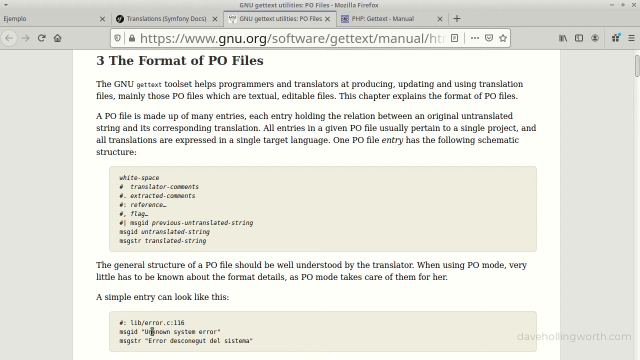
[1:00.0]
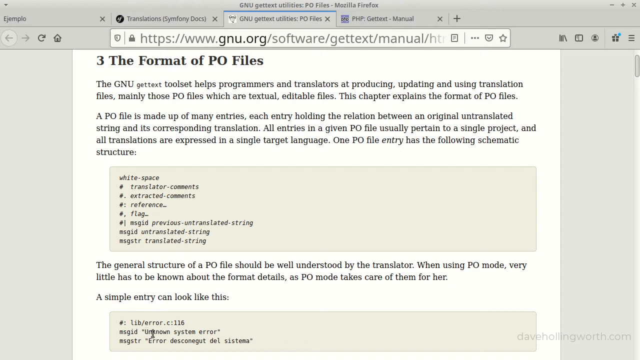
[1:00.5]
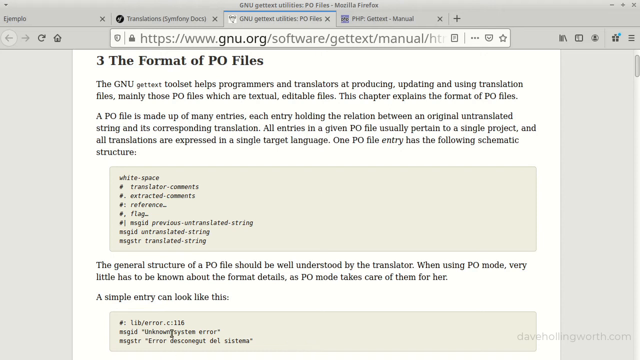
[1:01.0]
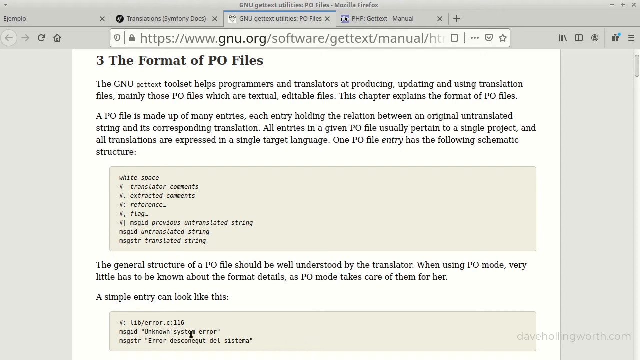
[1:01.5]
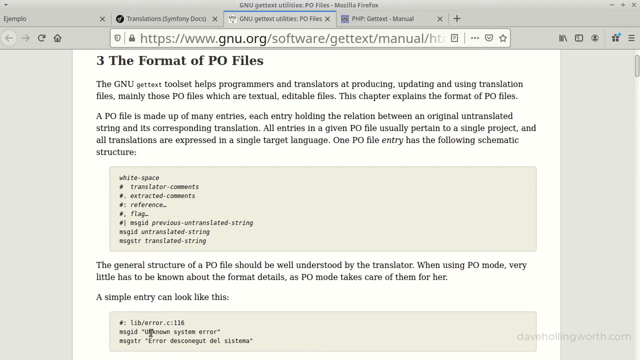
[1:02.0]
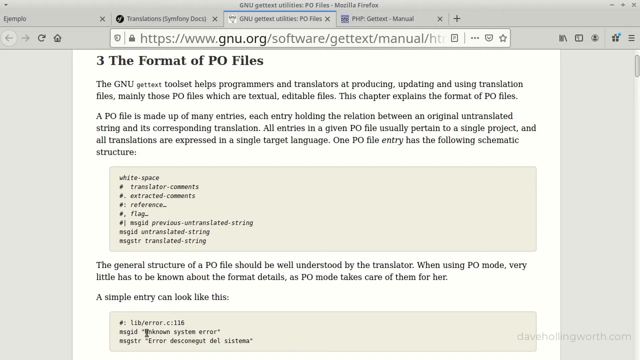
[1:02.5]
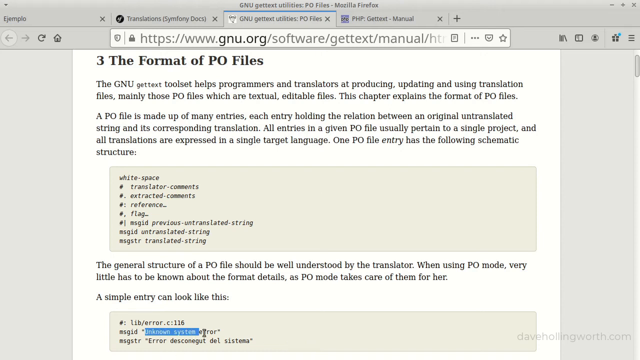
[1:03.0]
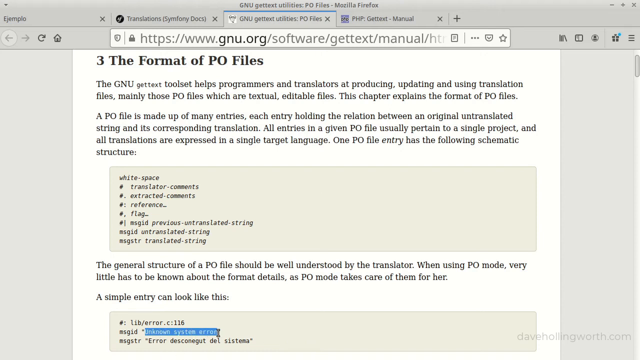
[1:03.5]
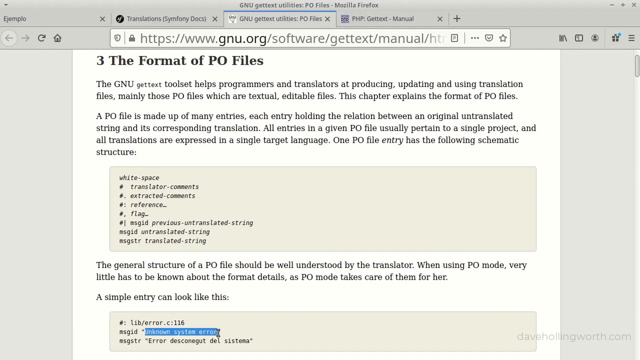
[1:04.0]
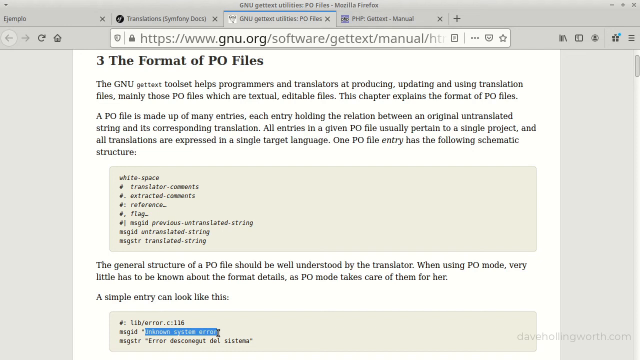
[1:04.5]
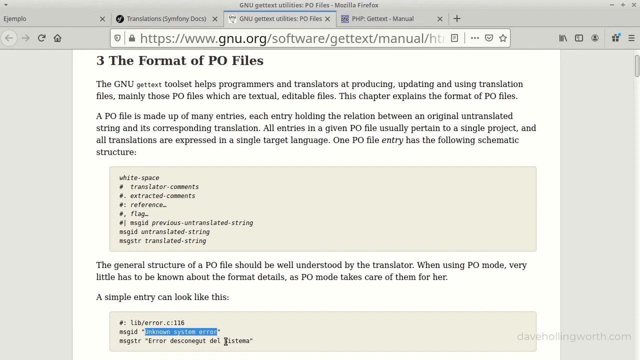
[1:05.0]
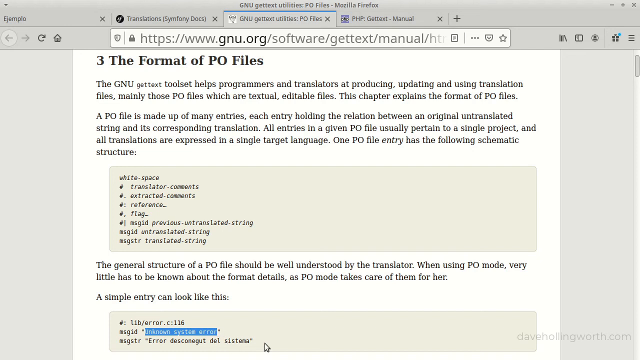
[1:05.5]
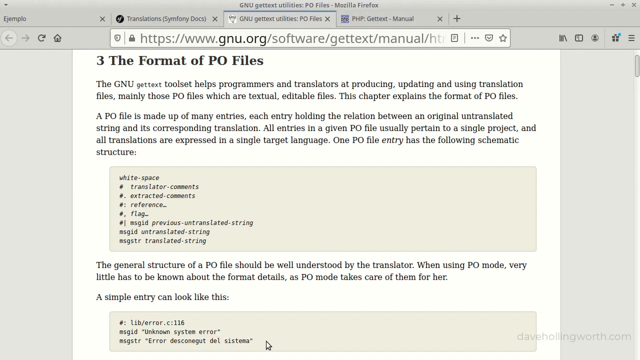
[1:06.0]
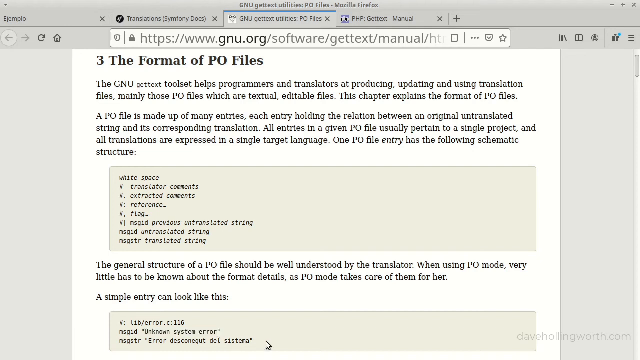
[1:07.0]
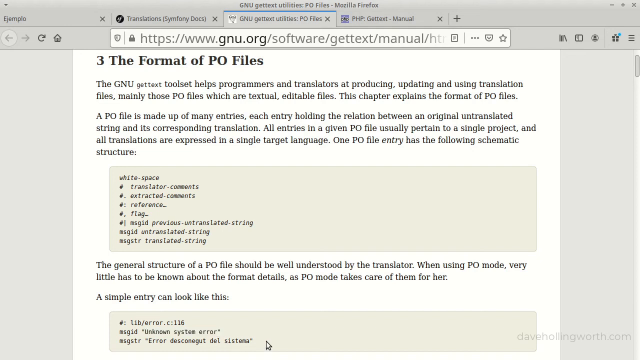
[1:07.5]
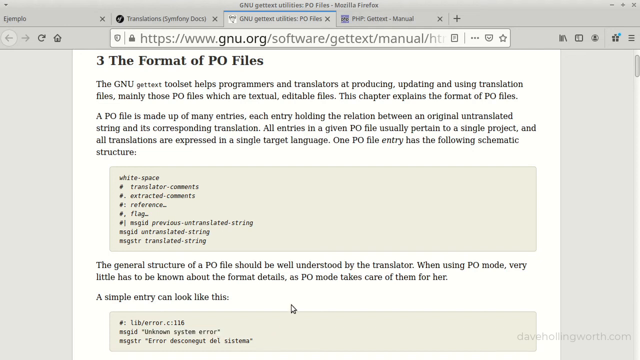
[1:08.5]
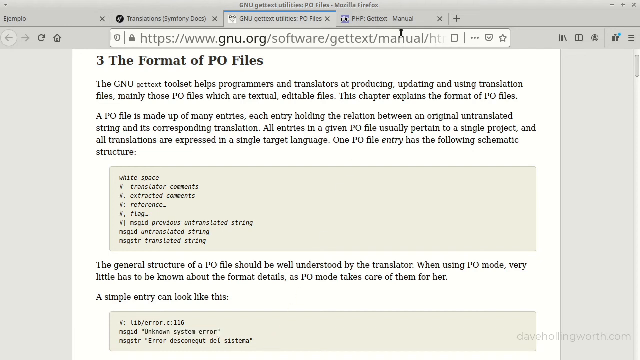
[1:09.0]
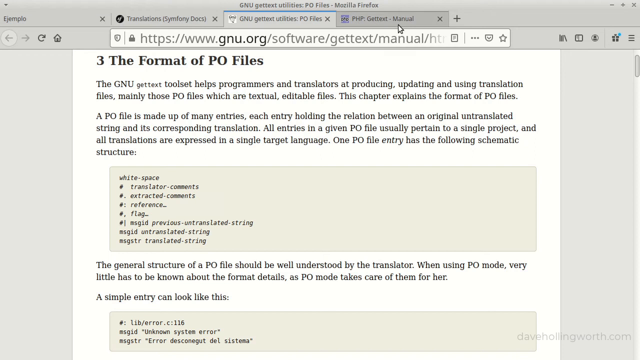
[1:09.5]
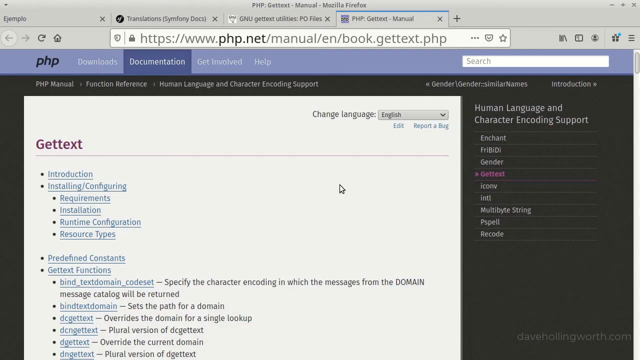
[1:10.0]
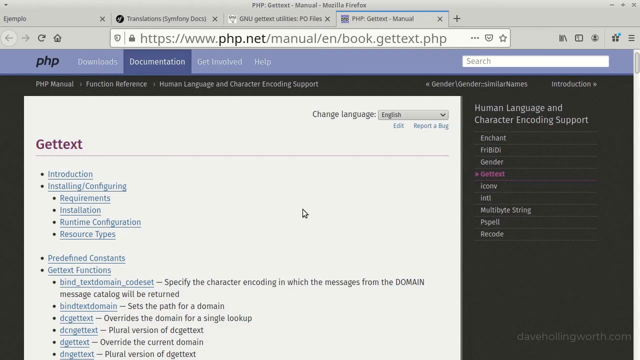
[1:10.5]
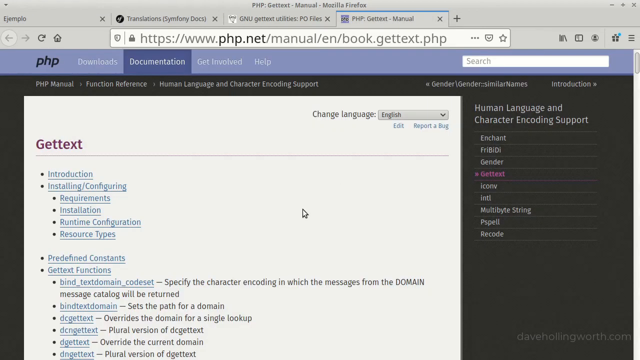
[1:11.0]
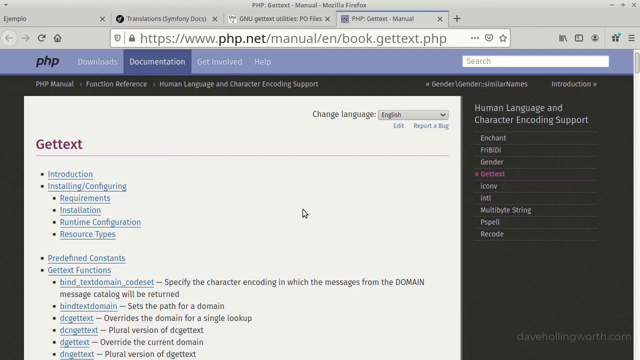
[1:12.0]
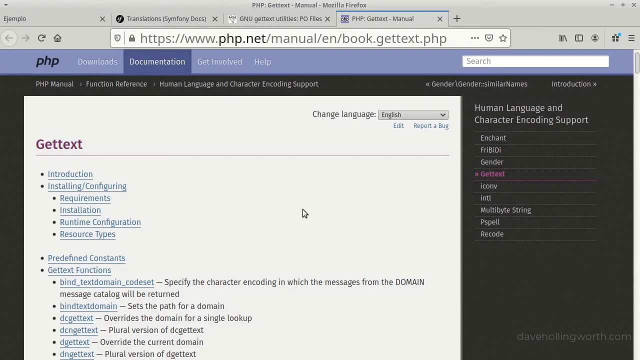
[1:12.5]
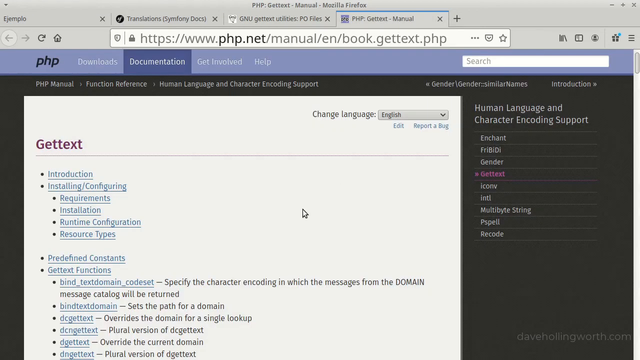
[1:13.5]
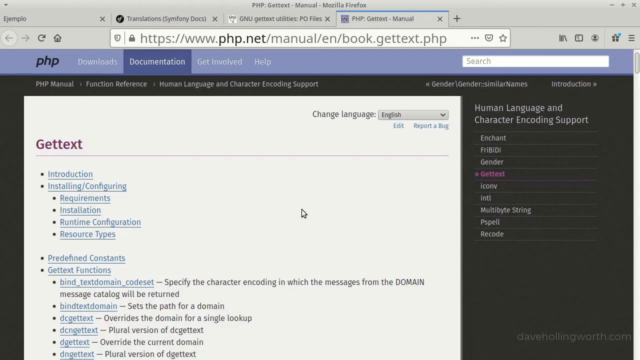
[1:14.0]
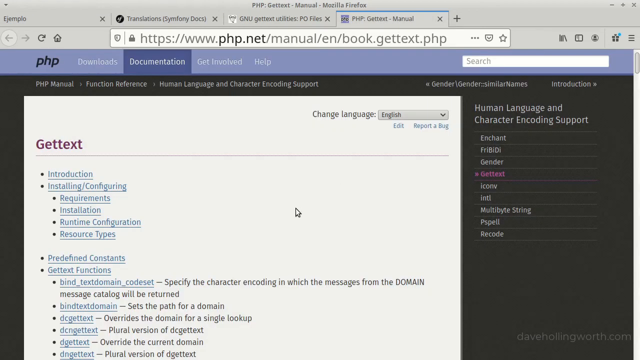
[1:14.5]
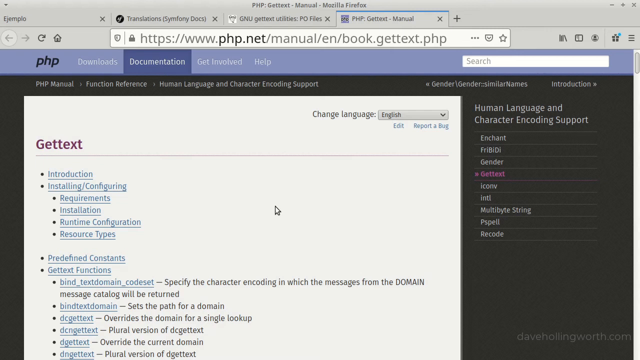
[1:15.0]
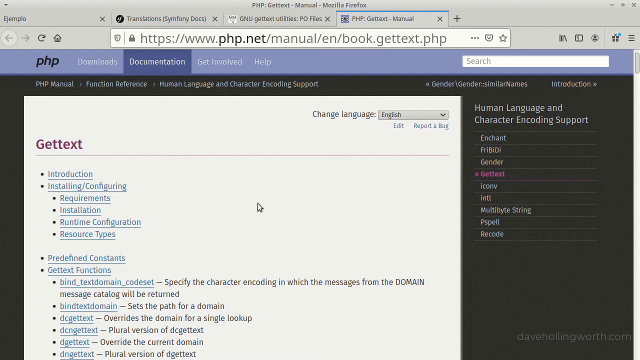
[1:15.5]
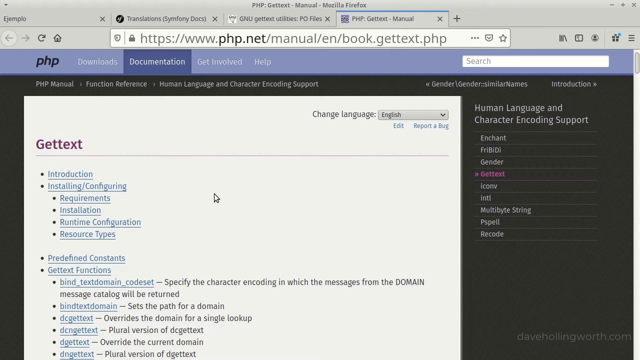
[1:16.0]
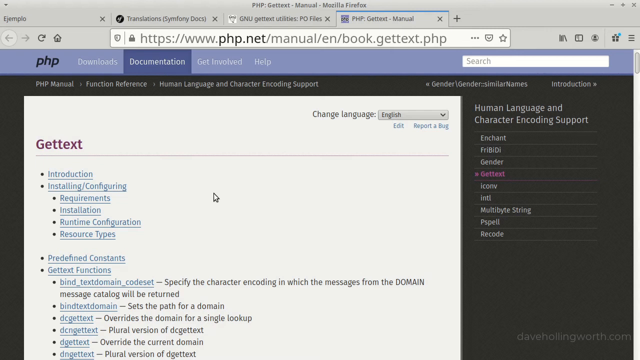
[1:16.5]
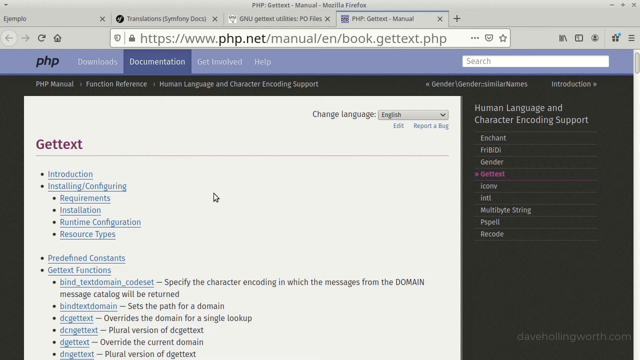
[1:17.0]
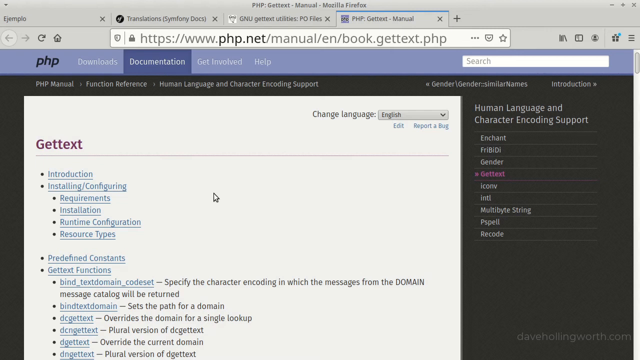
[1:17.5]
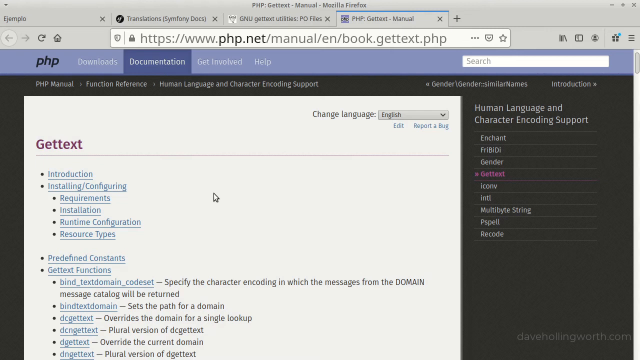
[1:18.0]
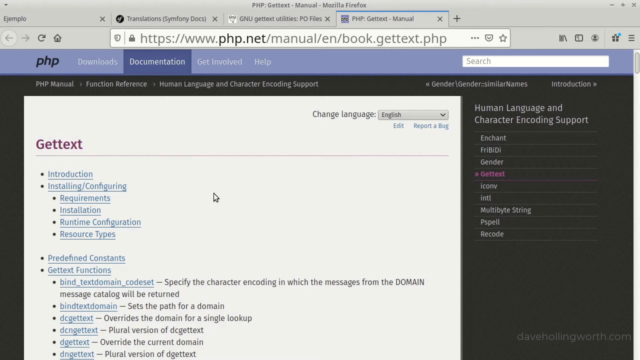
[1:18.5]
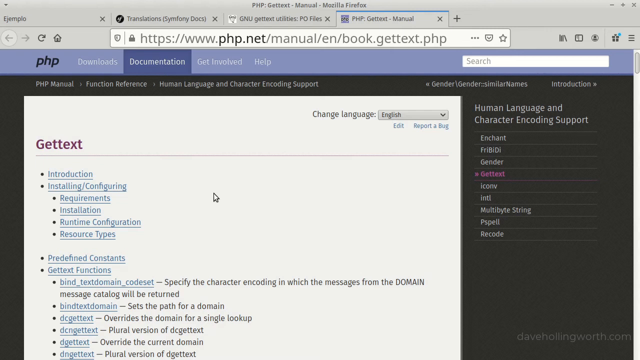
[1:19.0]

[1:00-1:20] The GNU.org website is still open, where the format of PO files is being reviewed, with a brief text description of what GNU text and a PO file are and examples of lines of code showing the structure. The browser then switches to another tab, php.net, a simple website in light blue, dark blue and white. "get text" appears at the top with an introduction, installing/configuration, requirements, installation, runtime configuration, resource types and other clickable items. Beneath are further links such as predefined constants, get text functions and find text domain code set, each explained. On the right is a list of more libraries: Enchant, FryBD, Gender, GetText, IconV, Intel, Recode and a couple more.